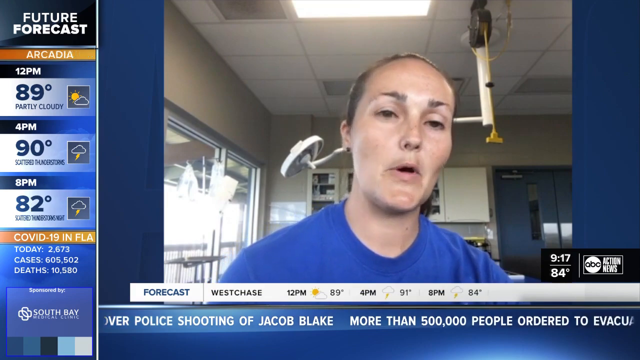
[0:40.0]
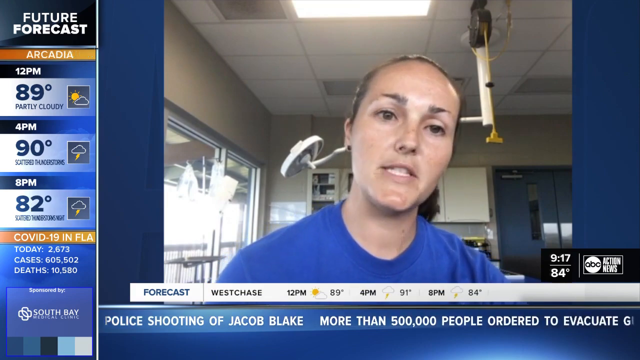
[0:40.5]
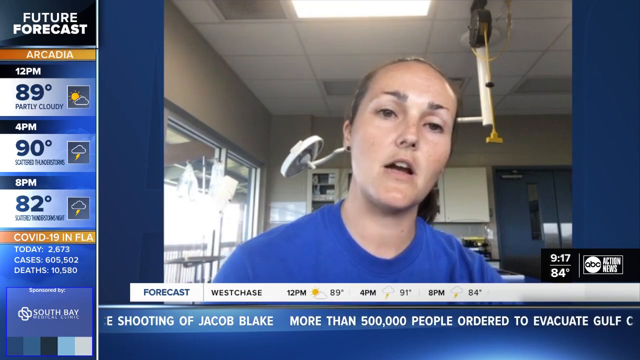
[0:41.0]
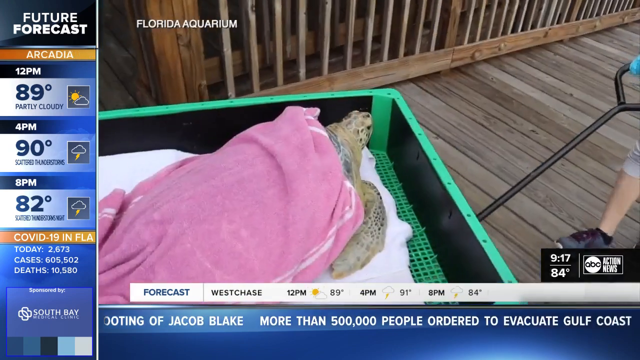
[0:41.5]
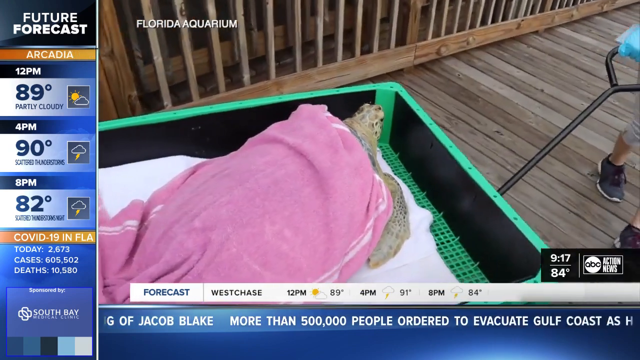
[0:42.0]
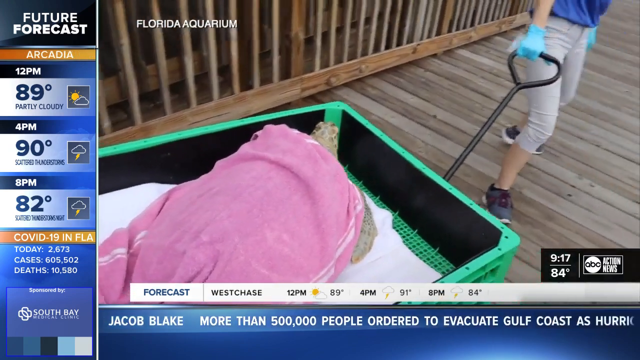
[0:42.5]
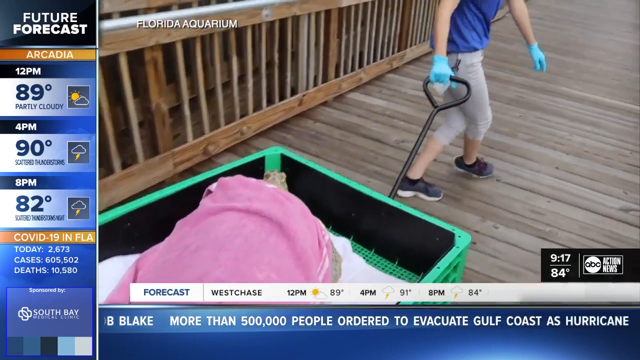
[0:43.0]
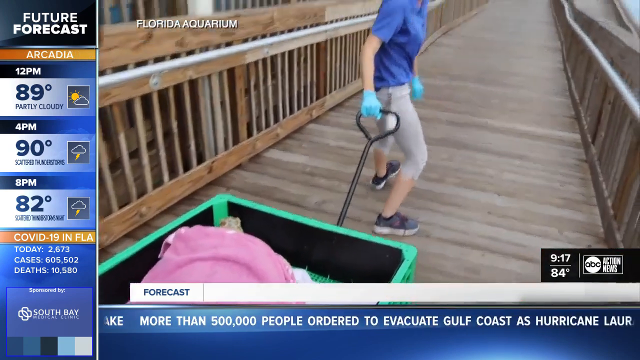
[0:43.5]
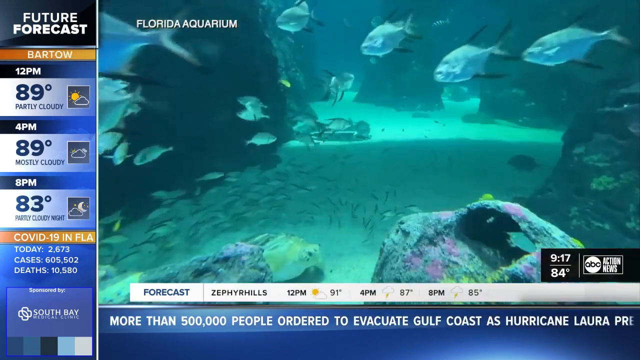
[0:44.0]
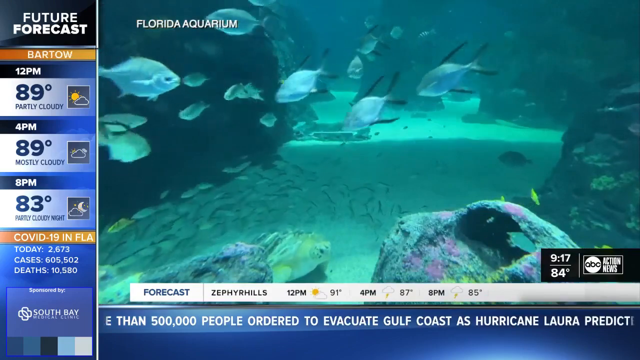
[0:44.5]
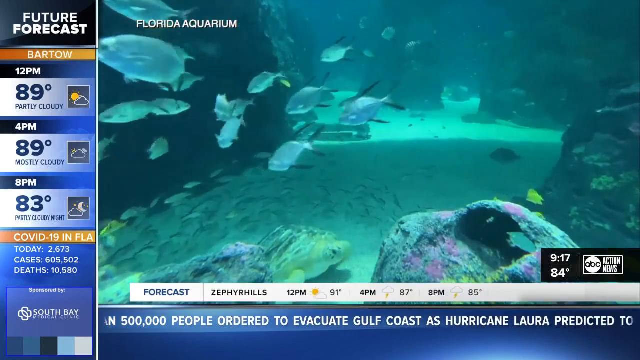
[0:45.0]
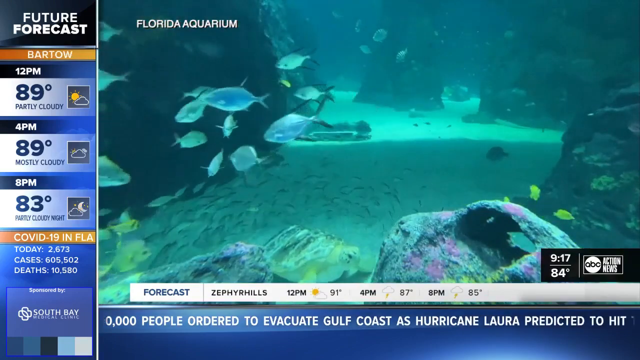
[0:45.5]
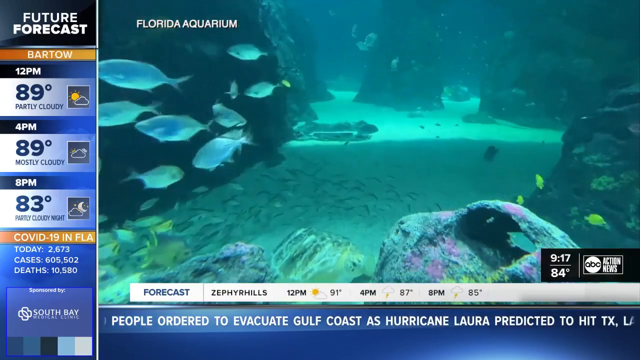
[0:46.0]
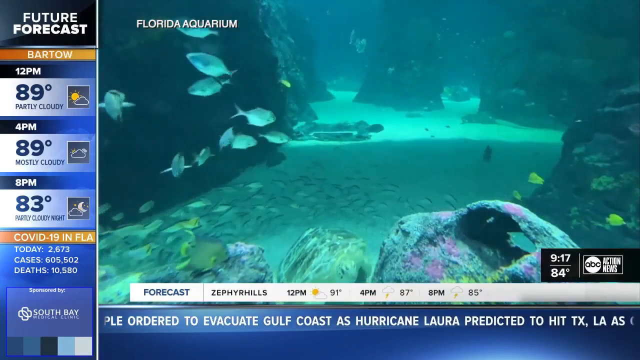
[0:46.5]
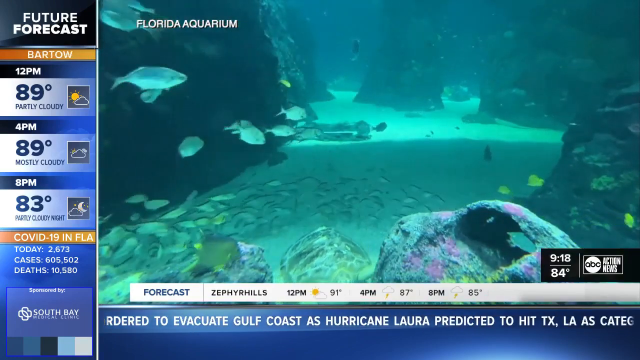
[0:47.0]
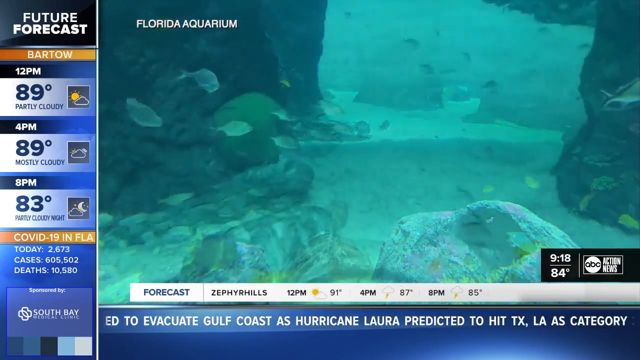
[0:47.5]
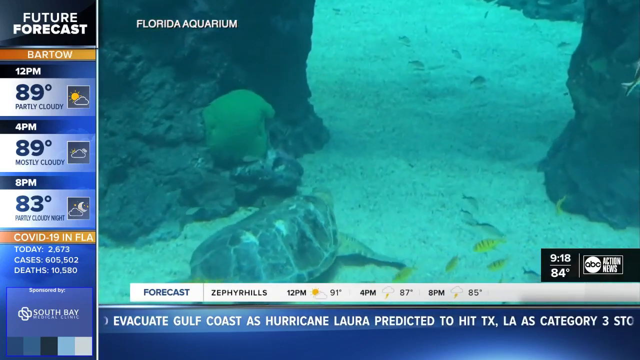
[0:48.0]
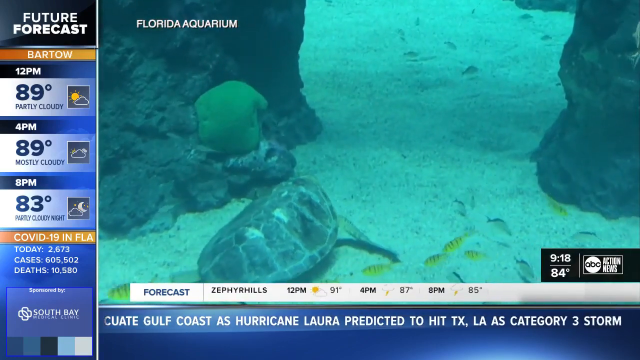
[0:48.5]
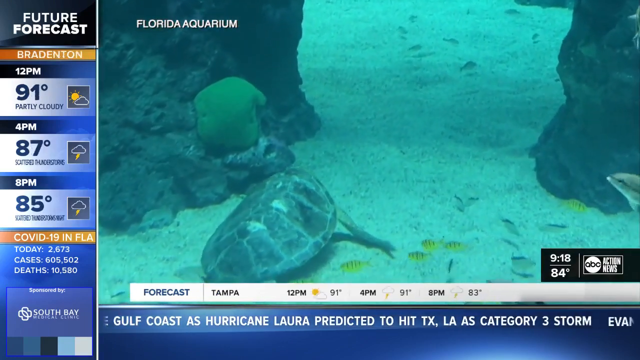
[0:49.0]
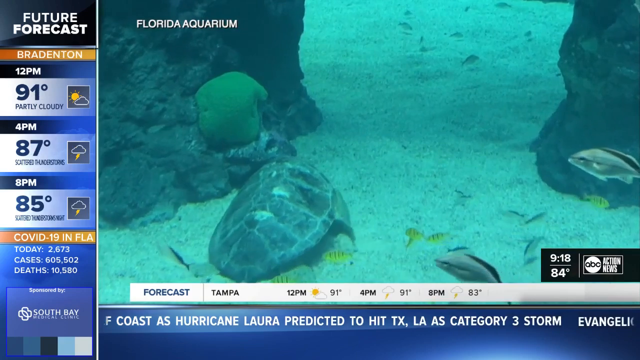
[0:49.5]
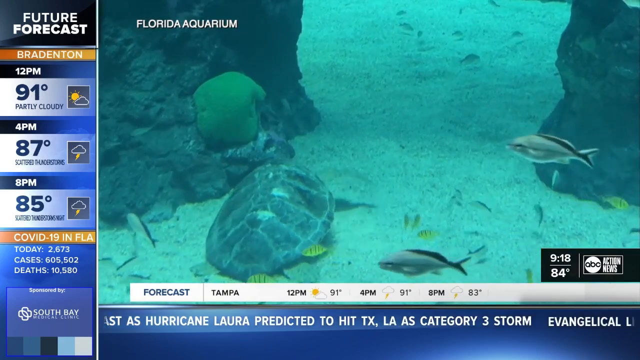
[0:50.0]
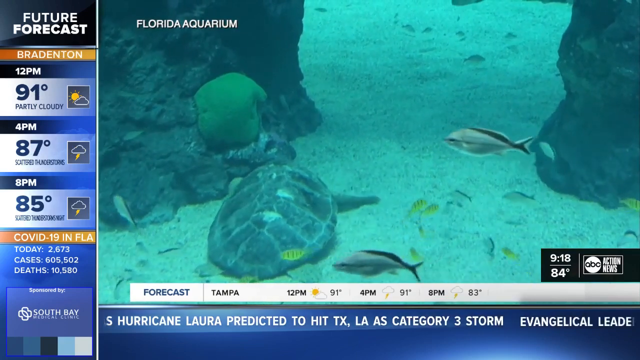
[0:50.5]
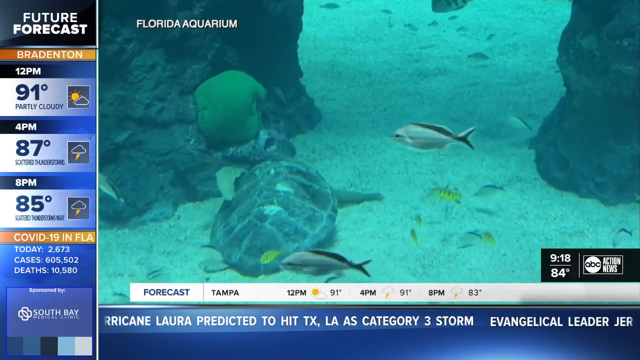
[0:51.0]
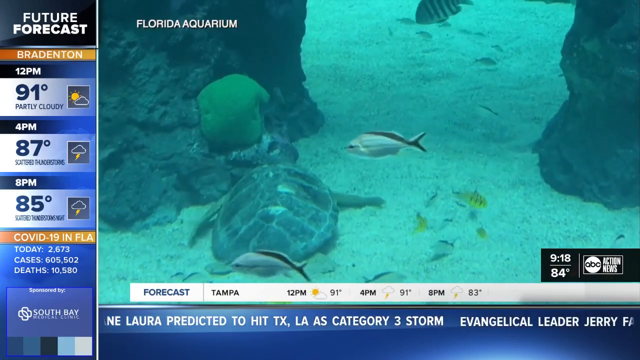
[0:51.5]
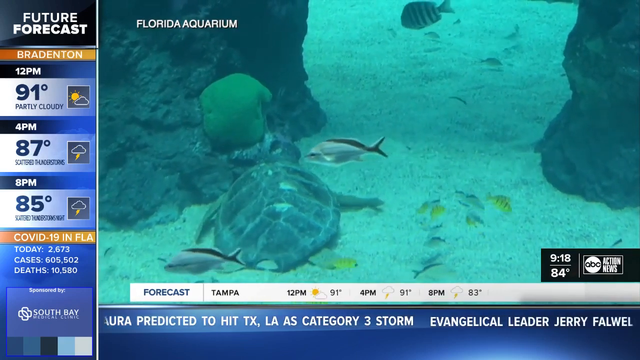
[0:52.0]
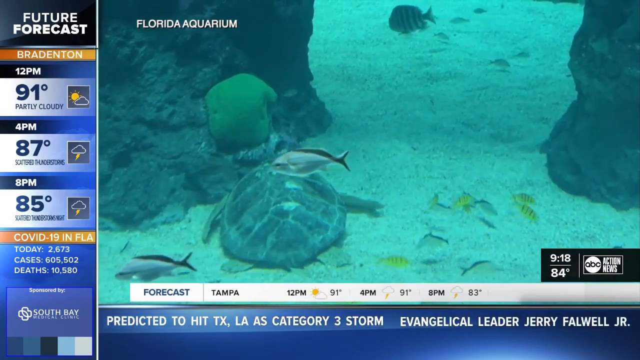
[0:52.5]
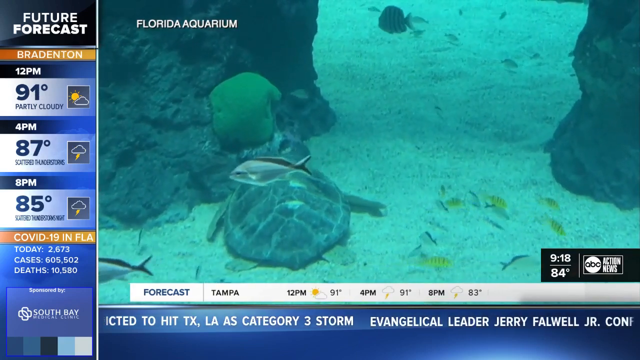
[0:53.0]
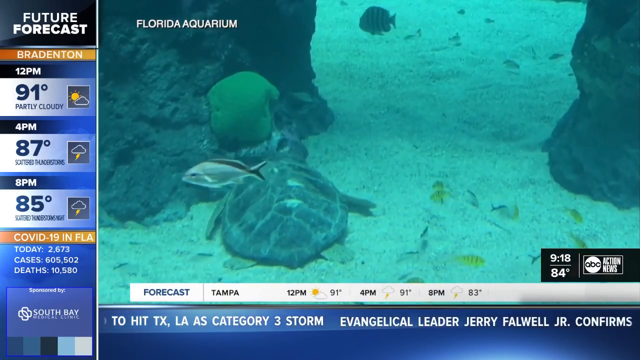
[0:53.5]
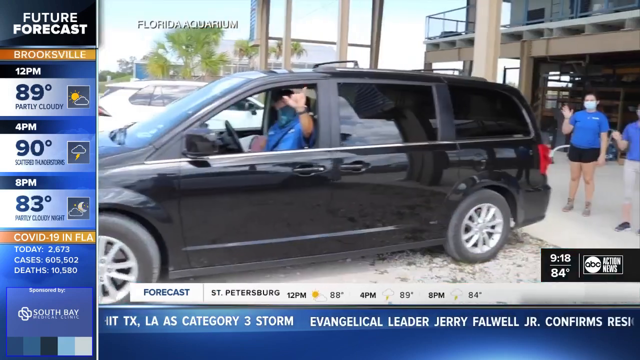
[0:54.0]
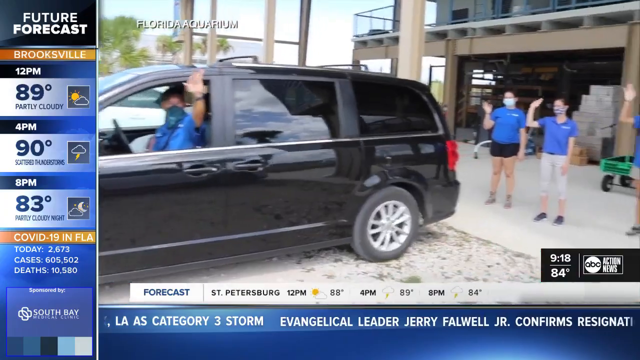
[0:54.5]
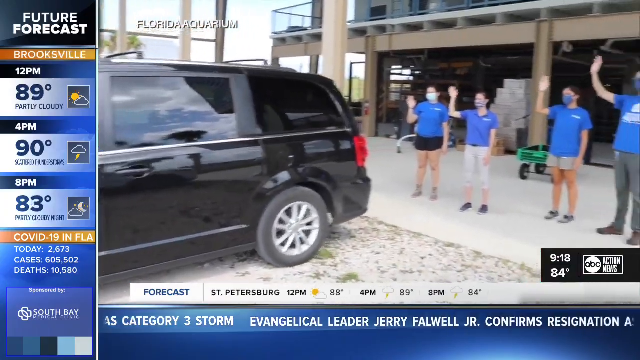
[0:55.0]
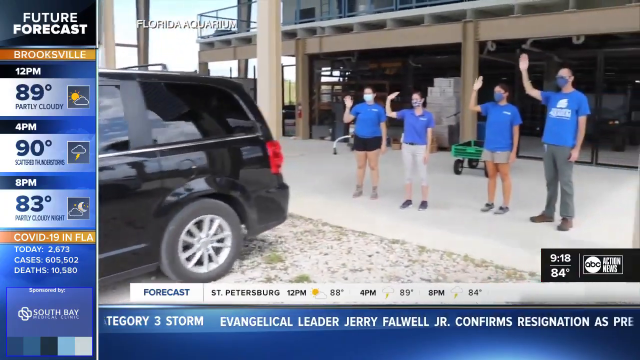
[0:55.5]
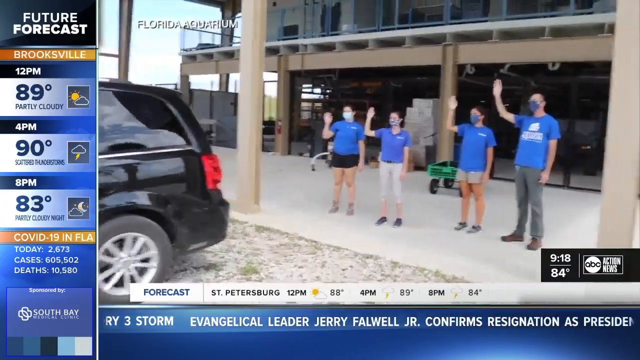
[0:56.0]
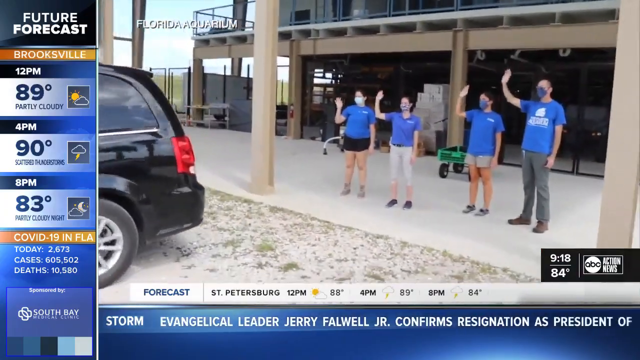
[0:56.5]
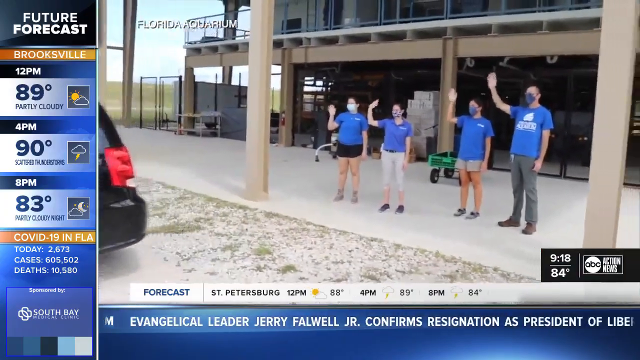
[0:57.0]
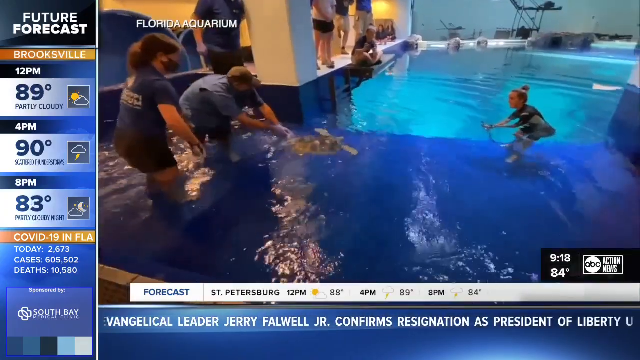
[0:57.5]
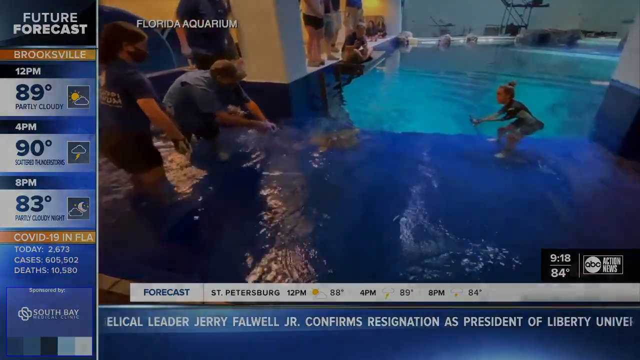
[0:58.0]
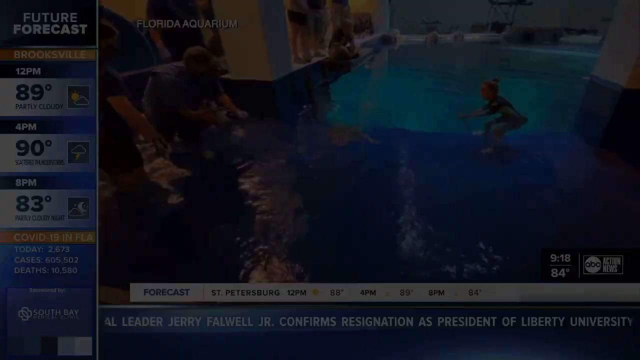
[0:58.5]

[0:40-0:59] Video footage shows her carrying the tortoise around in a wagon, along with footage of different fish and the aquarium. The segment closes with them waving off someone who helped transport or relocate the turtle.